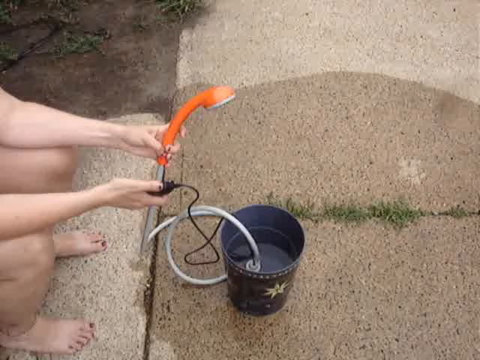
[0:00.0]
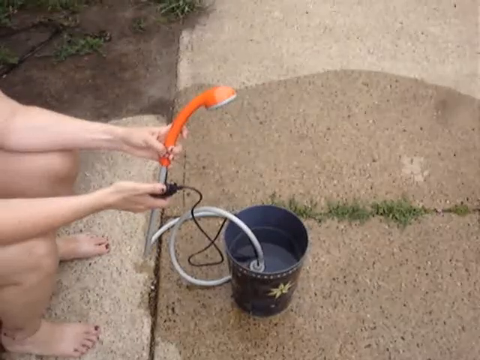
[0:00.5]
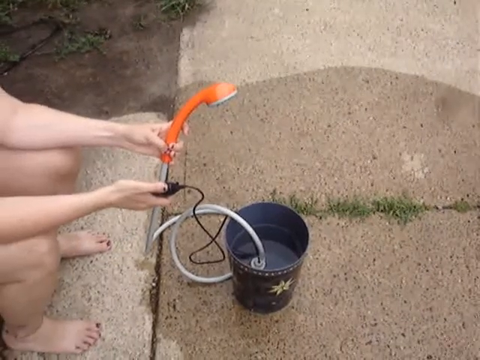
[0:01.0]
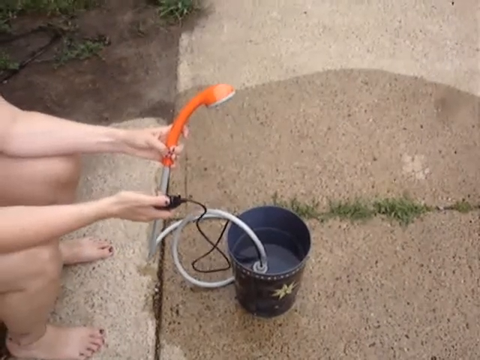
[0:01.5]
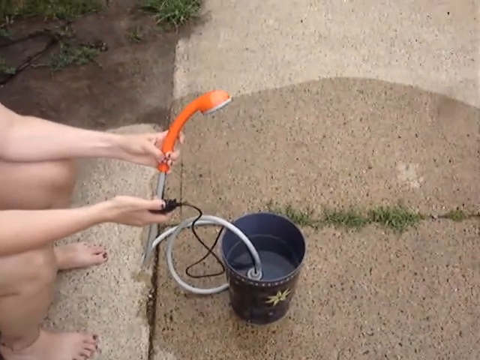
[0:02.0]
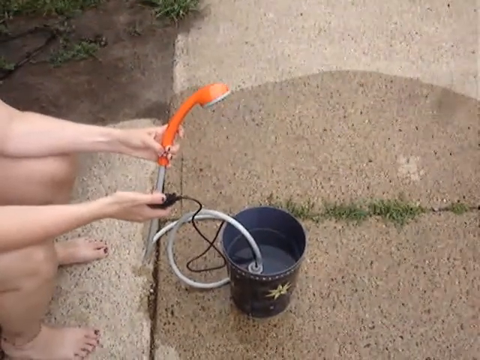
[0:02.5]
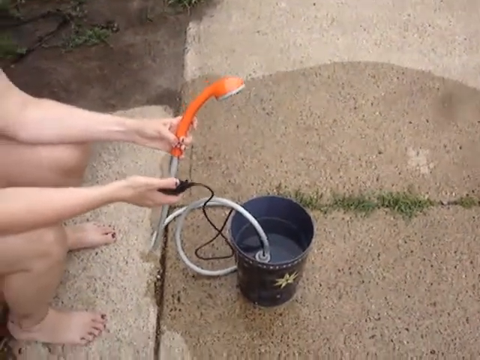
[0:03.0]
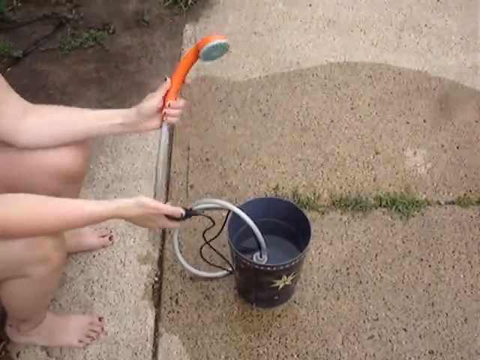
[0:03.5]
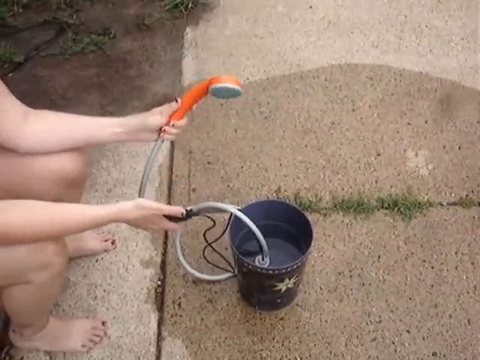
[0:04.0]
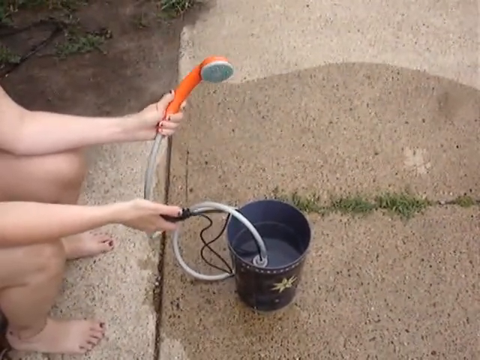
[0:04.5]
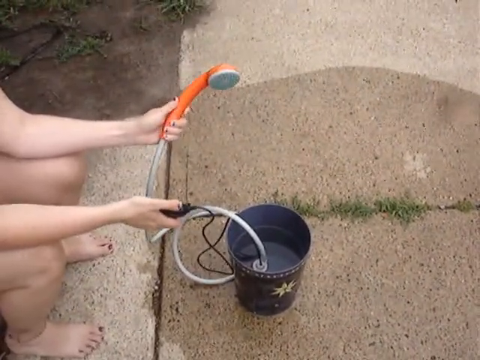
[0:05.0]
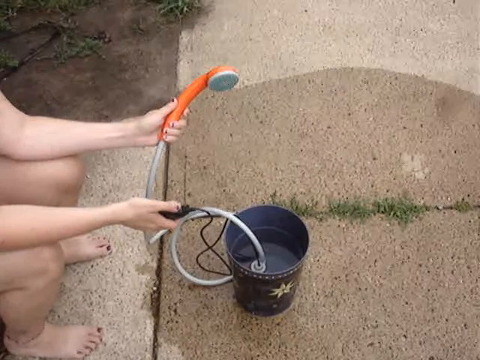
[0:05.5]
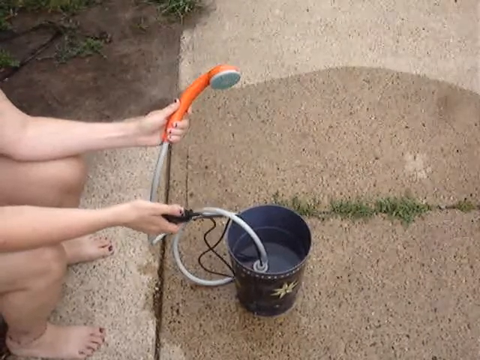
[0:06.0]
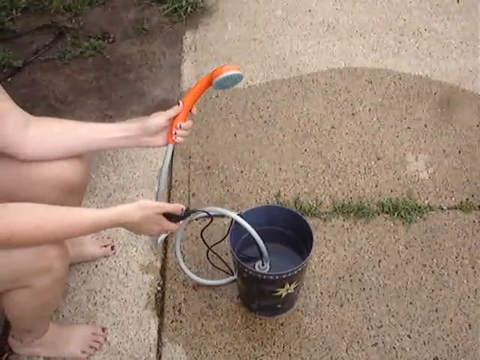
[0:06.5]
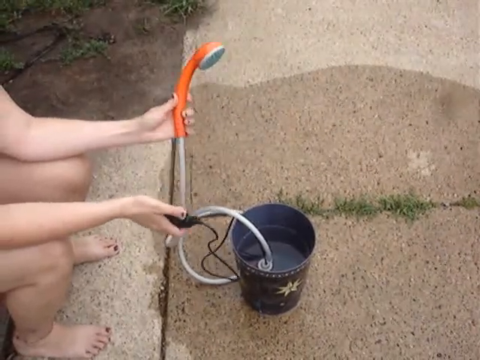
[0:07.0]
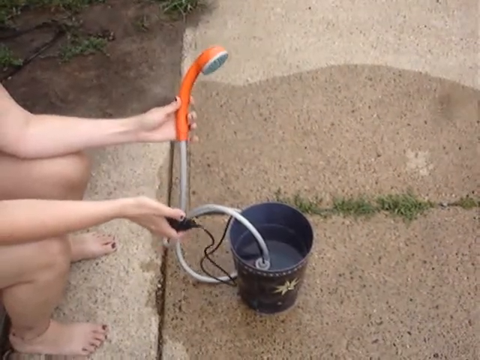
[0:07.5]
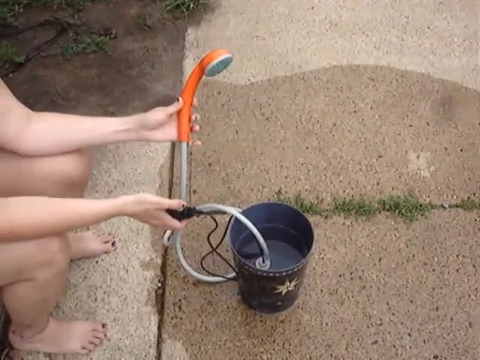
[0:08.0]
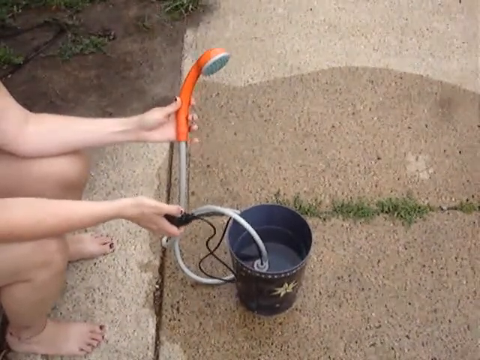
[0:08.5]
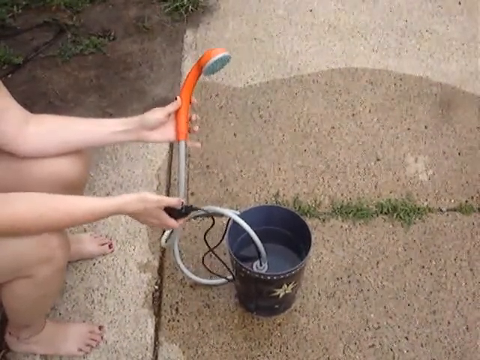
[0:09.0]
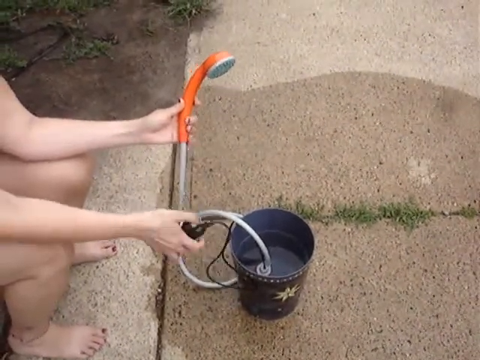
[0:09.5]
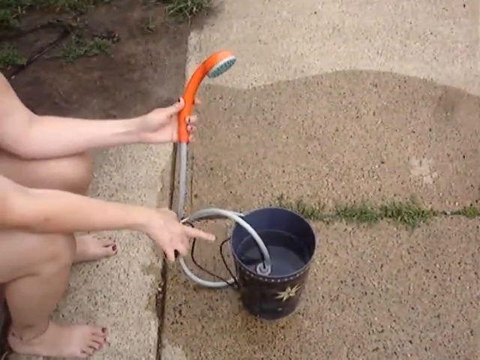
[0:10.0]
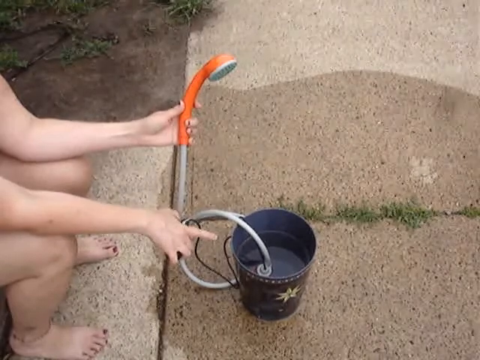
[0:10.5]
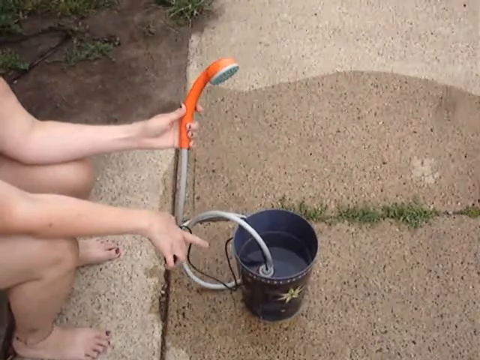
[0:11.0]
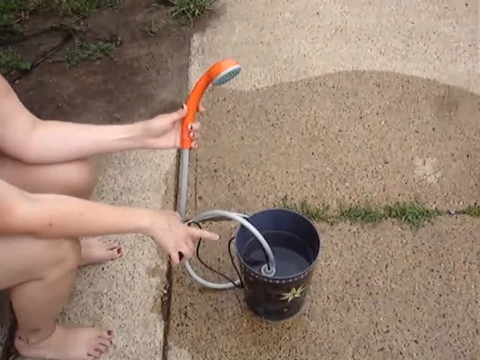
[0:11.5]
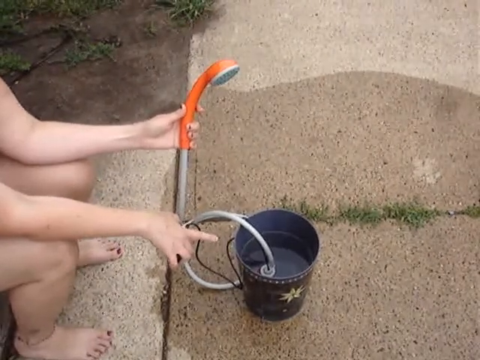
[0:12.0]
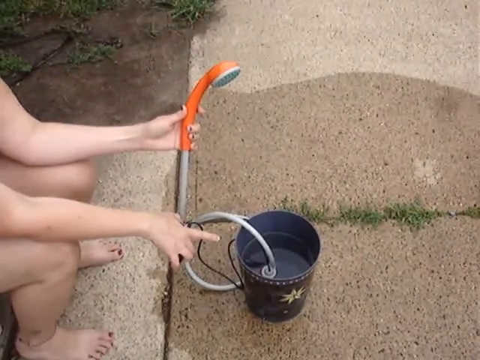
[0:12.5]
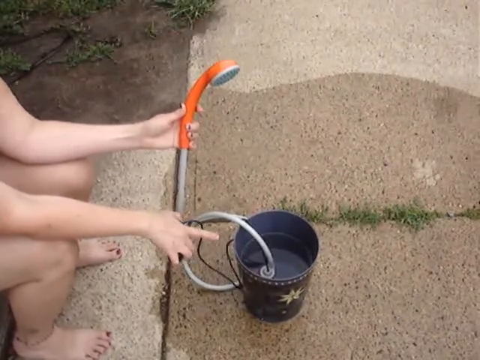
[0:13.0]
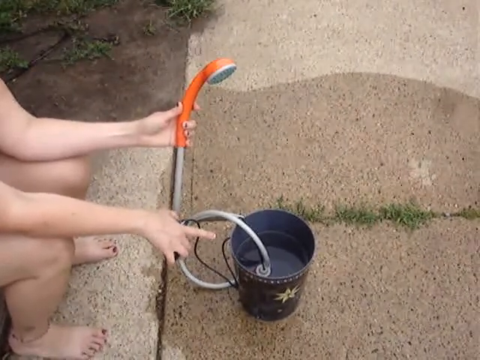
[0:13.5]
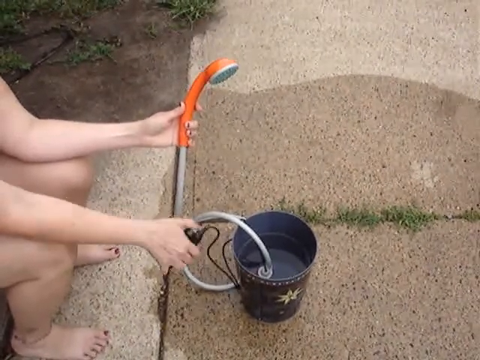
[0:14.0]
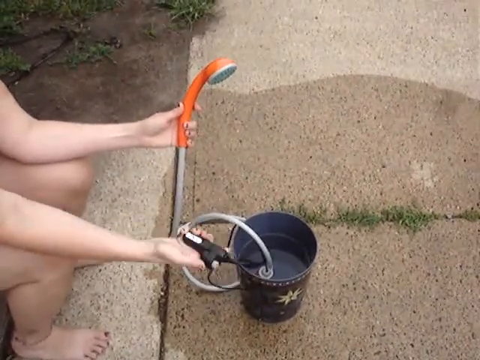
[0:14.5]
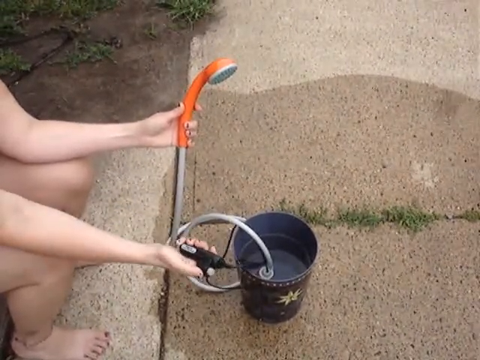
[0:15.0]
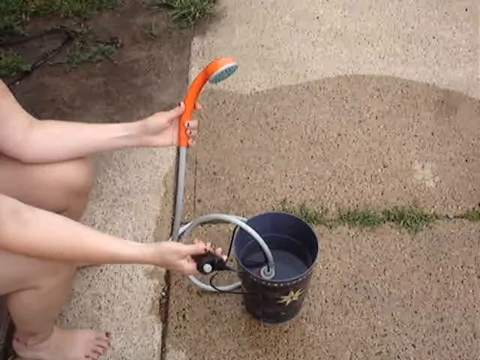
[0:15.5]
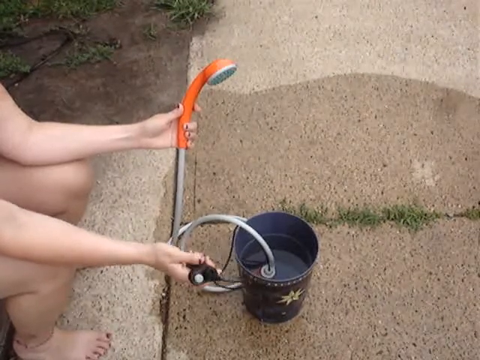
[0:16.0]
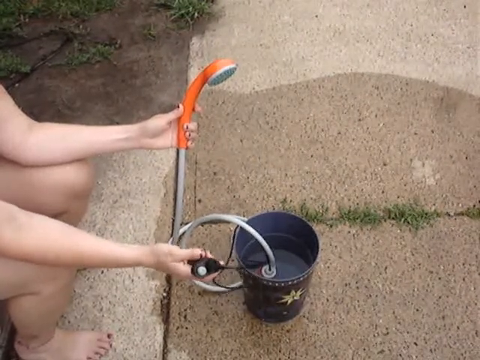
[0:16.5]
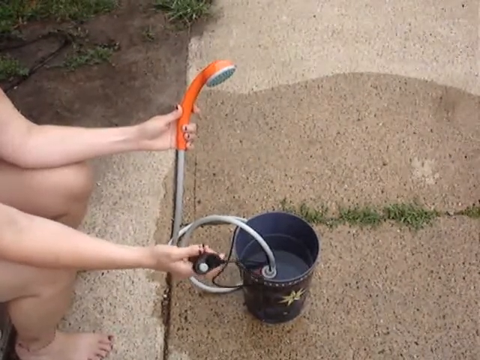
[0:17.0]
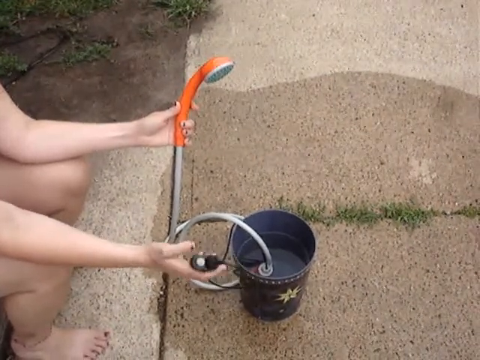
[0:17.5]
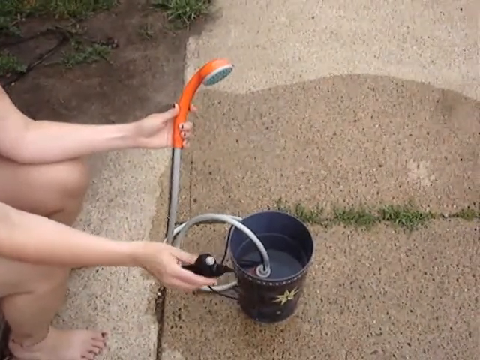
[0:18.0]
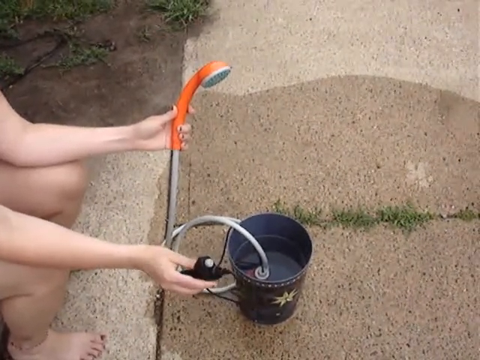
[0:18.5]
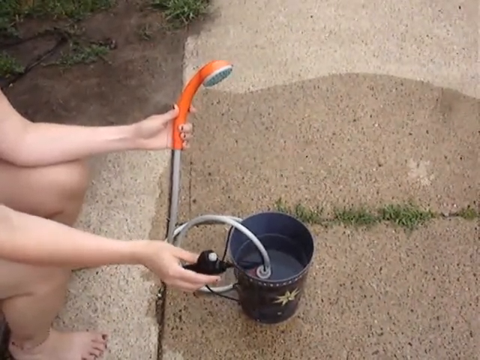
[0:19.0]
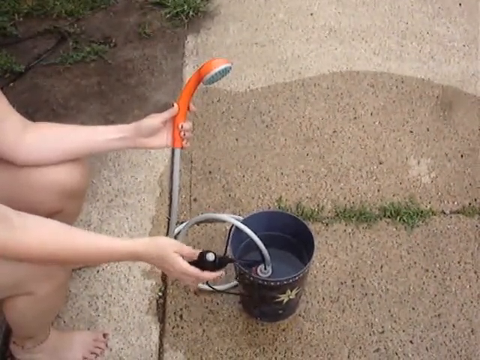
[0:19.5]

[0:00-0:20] A person holds an orange shower head in their left hand, pointed toward the inside of a bucket, and a remote of sorts in their right hand. The person gestures with the right hand holding the remote. A wire comes out of the remote and seems to be connected to a power source hidden inside the water bucket. As the remote is moved around, it is revealed to have a button. The camera is slightly unsteady, as the video is filmed on a cell phone camera. The person demonstrating is not wearing any shoes.